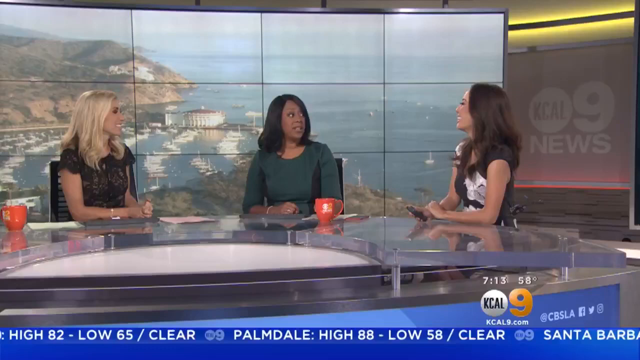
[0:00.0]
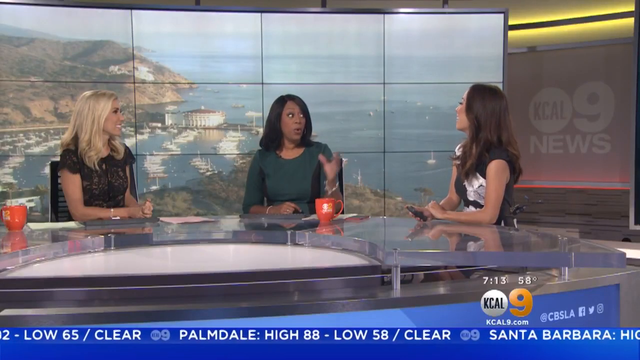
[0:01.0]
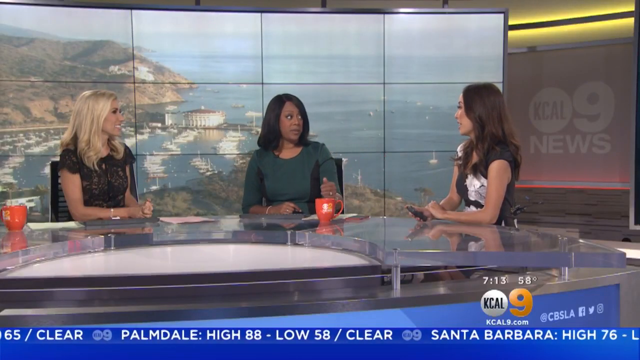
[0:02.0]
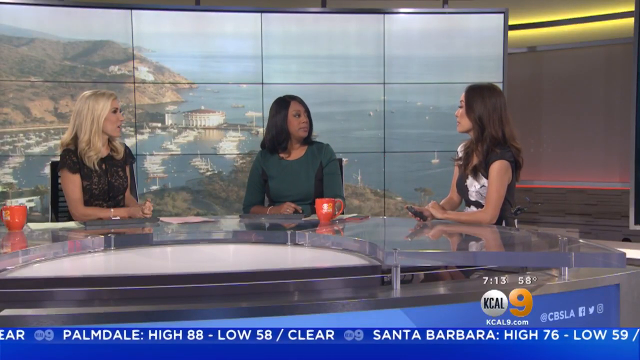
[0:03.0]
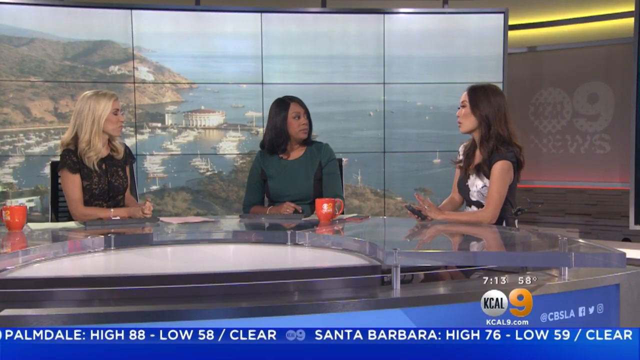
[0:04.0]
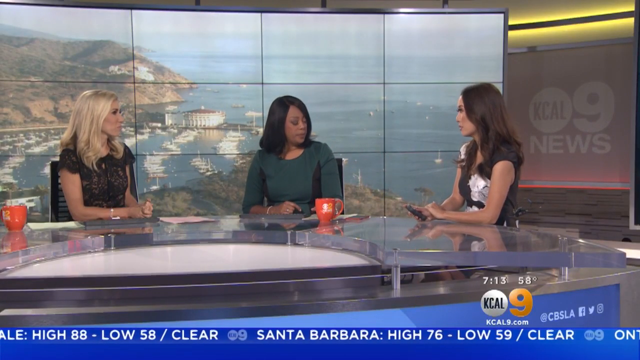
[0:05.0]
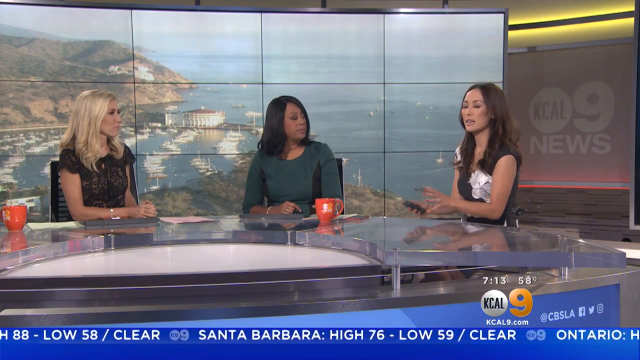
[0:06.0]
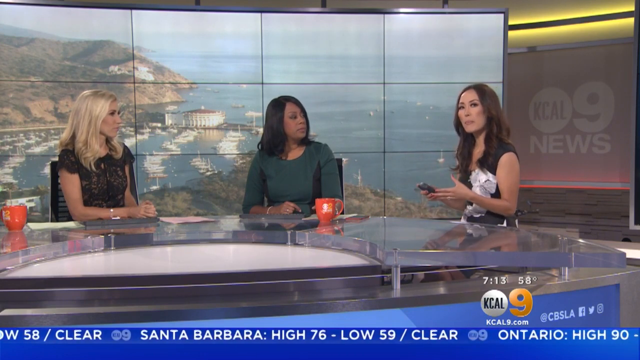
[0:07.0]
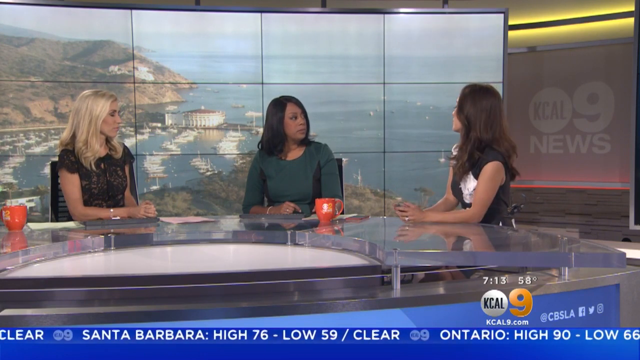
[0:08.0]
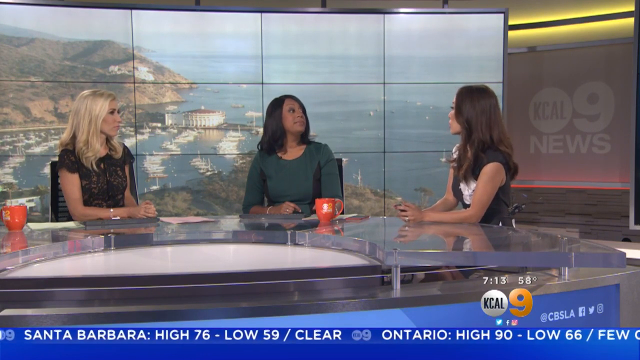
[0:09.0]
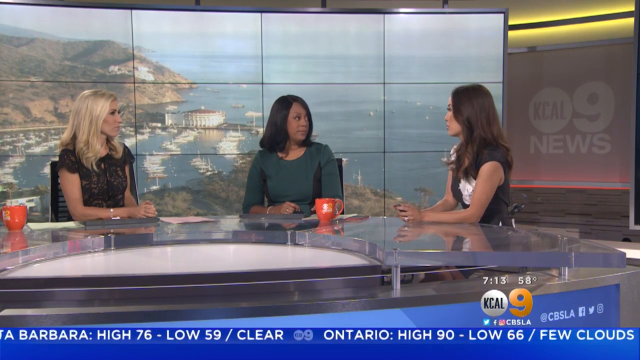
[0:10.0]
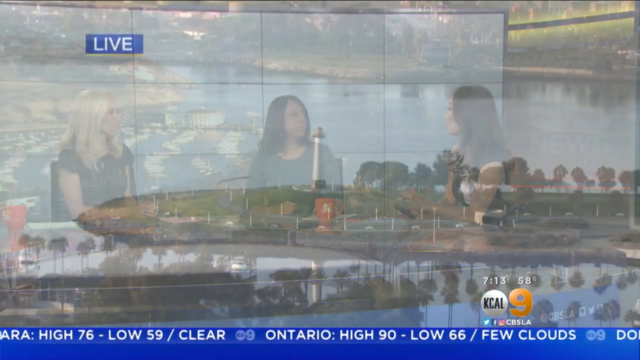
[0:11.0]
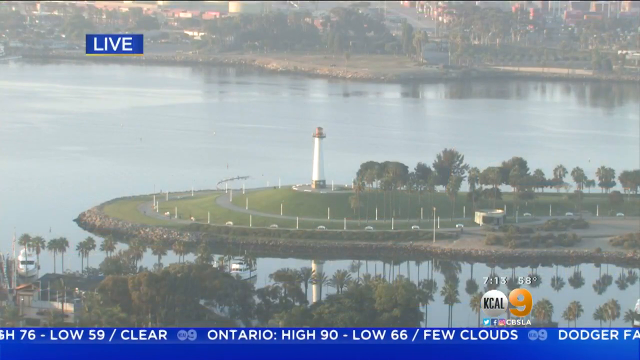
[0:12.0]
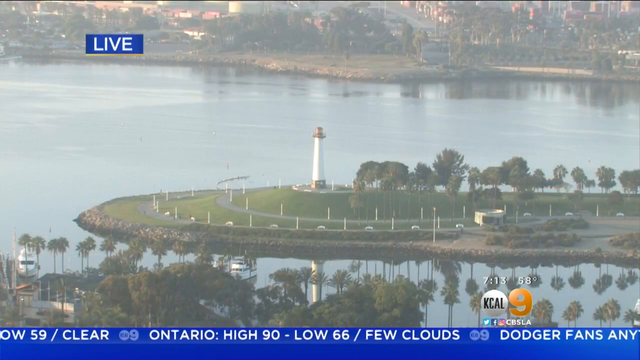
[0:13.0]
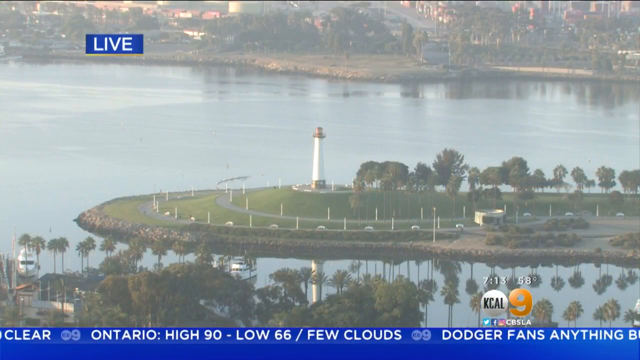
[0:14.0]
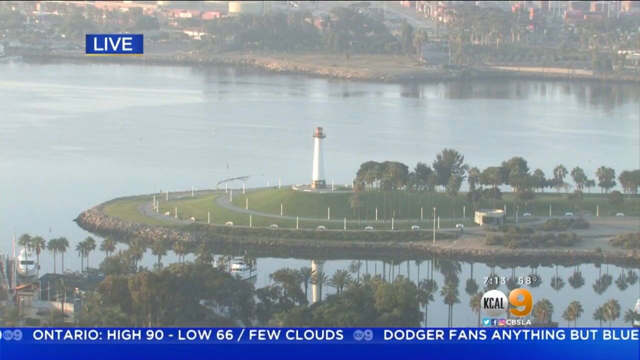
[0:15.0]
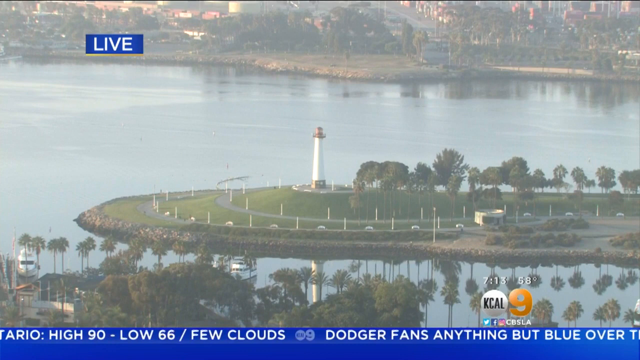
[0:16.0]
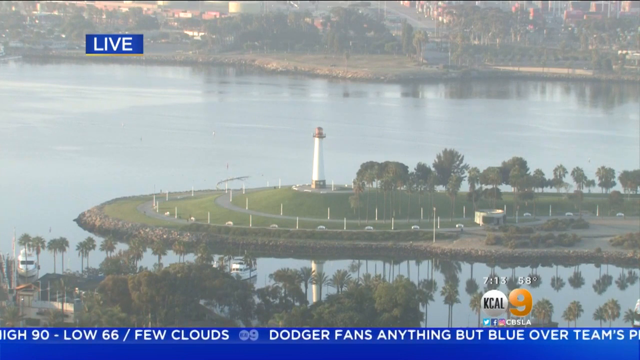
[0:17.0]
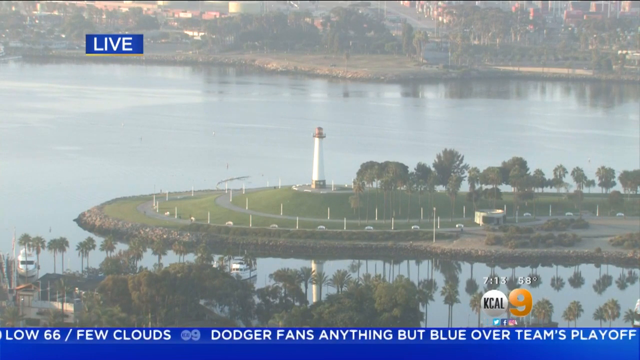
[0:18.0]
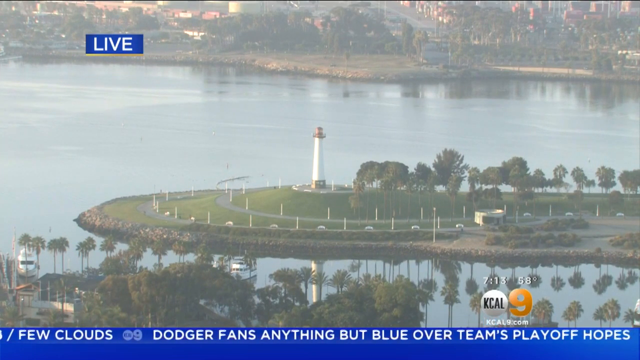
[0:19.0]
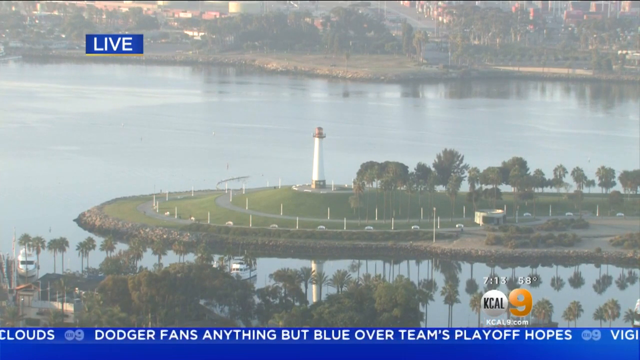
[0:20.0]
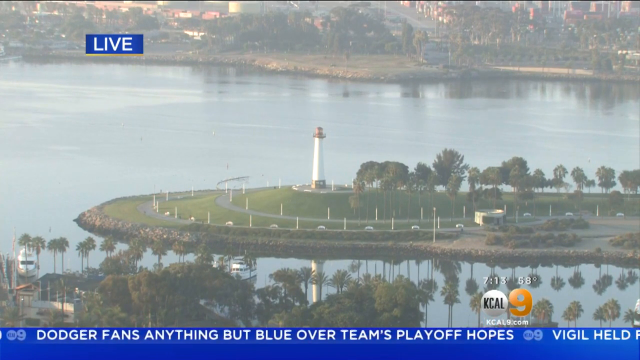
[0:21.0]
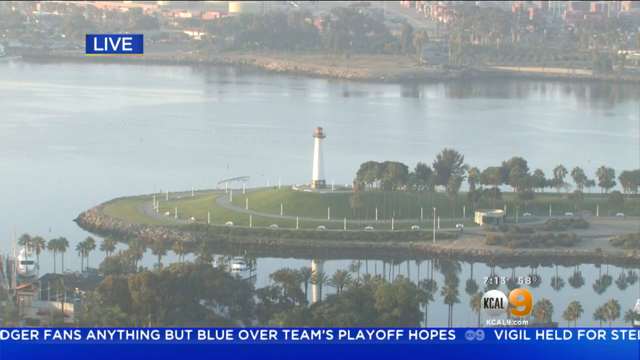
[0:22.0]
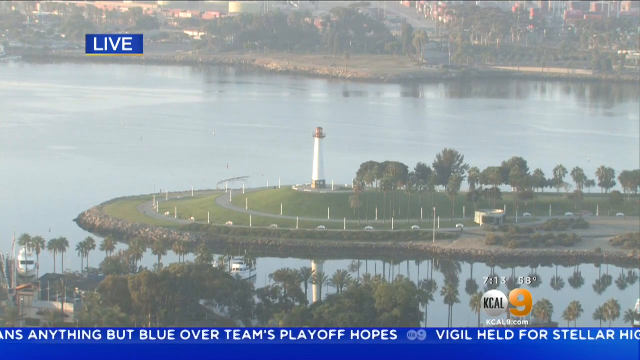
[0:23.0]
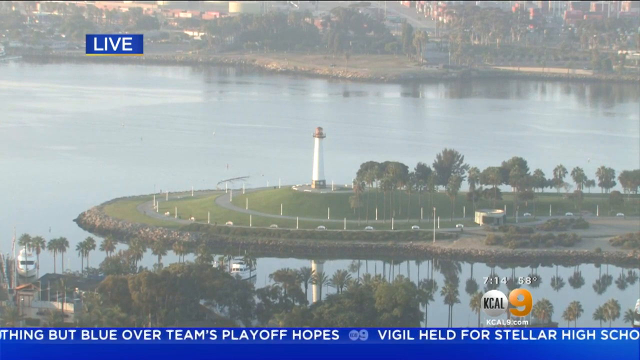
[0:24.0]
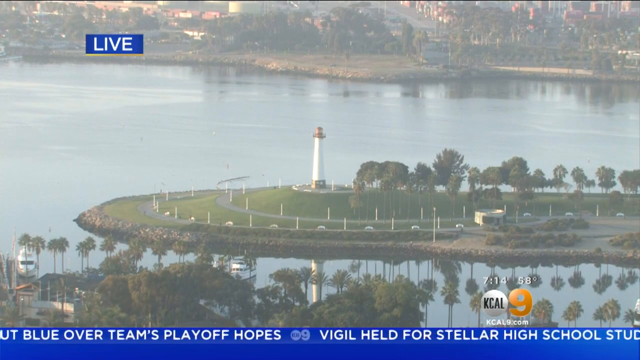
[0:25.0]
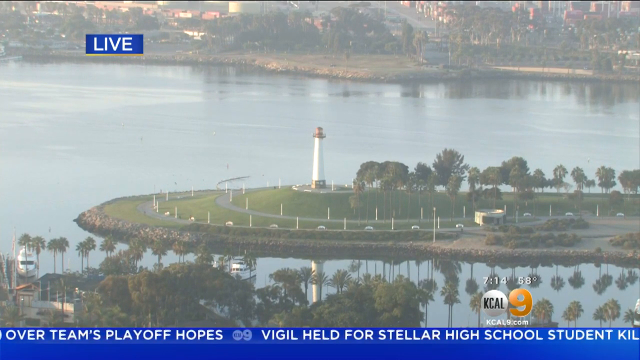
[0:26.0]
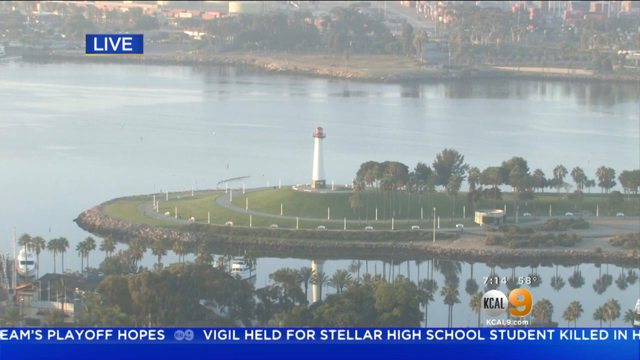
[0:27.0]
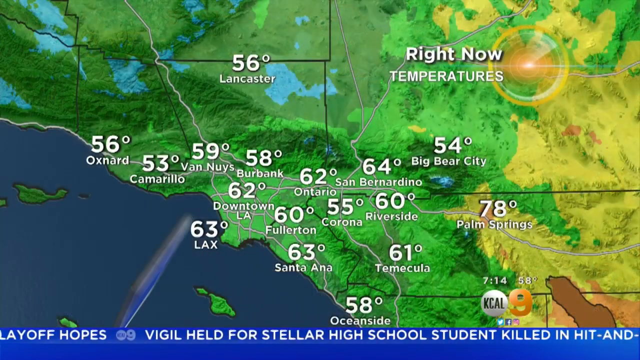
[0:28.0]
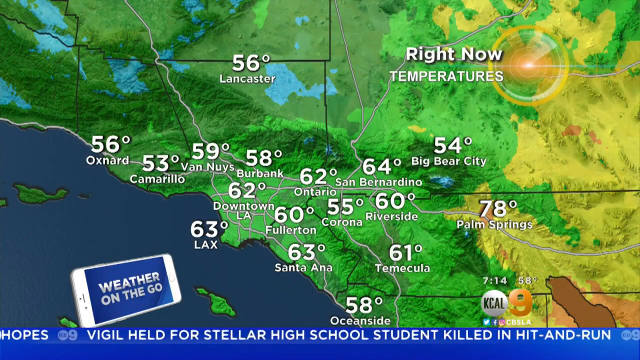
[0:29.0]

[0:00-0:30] Three women talk at a news desk, with on-screen text that includes "channel 9 news." One is an African American woman and two are Caucasian women; their hair is brunette, black and blonde. They have orange coffee mugs on the desk, and there is news text at the bottom of the screen. An aerial live view follows, showing a light and an area surrounded by a big body of water; the location is unclear, possibly California or somewhere in Canada. Temperatures then appear: "Ontario 62 degrees," "Palm Springs 78 degrees," Burbank, and "LAX 63 degrees."